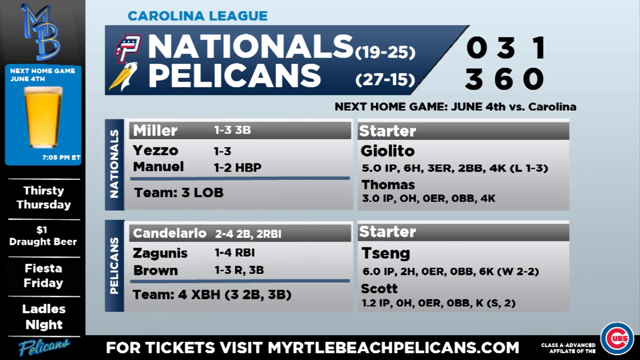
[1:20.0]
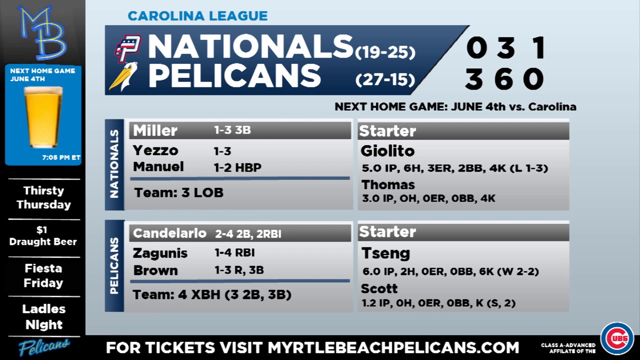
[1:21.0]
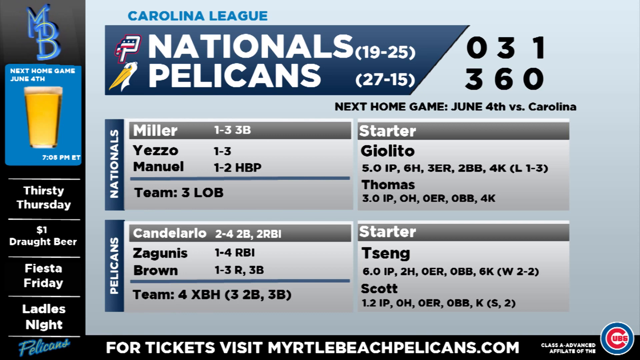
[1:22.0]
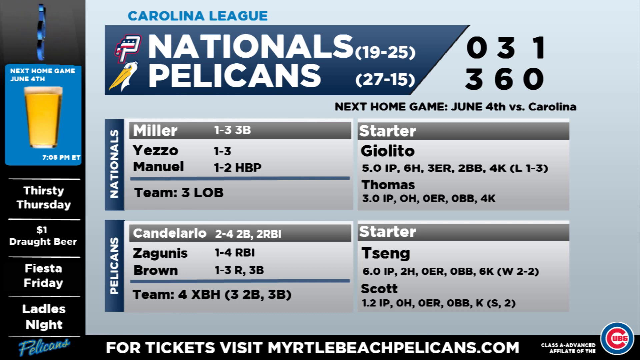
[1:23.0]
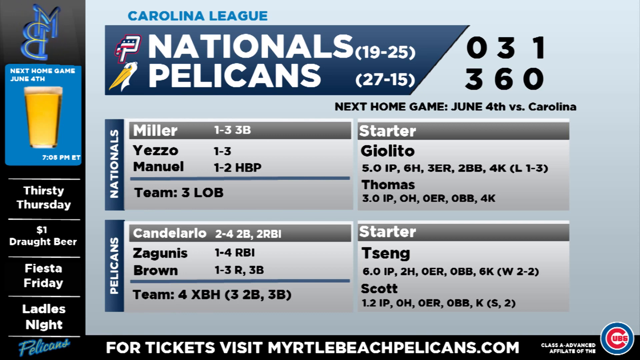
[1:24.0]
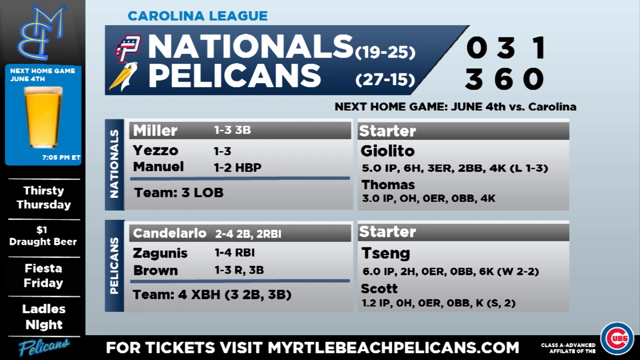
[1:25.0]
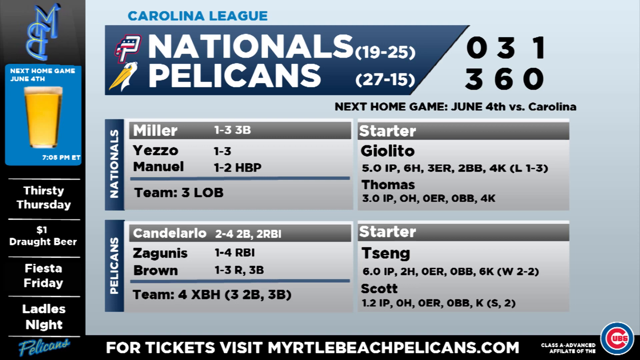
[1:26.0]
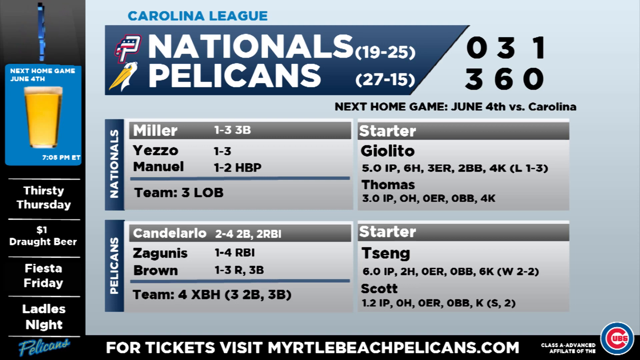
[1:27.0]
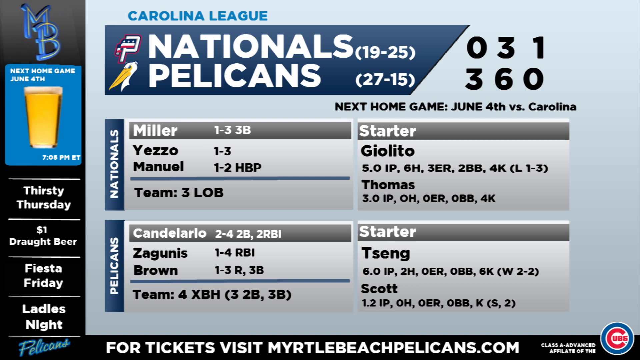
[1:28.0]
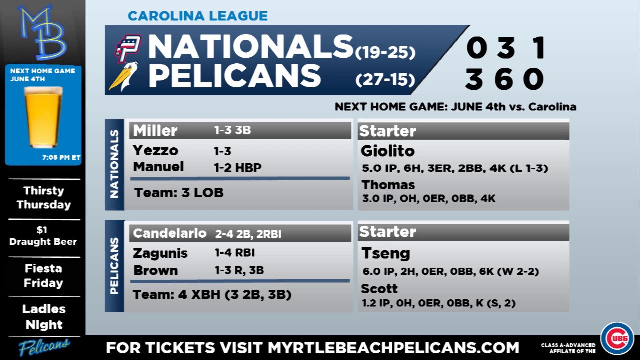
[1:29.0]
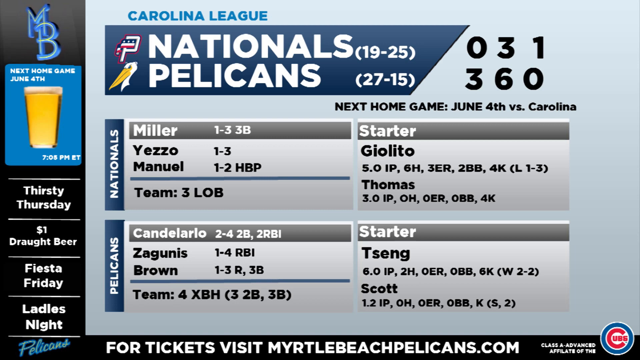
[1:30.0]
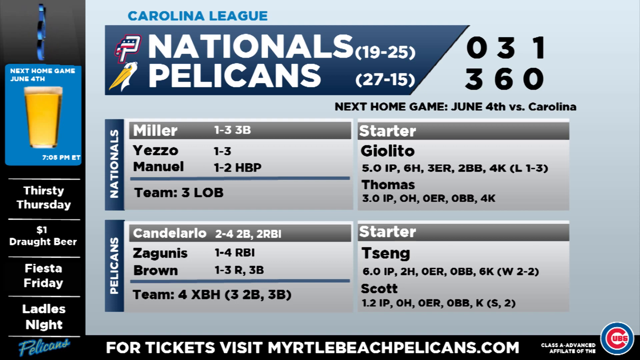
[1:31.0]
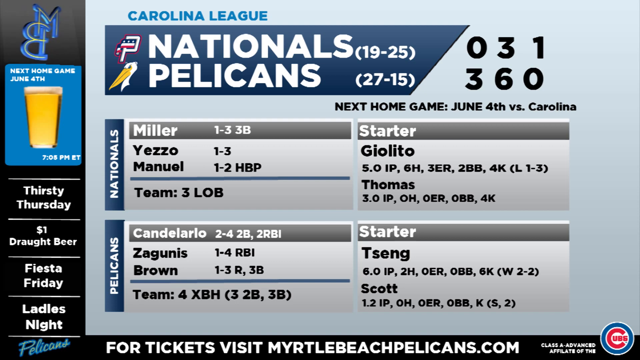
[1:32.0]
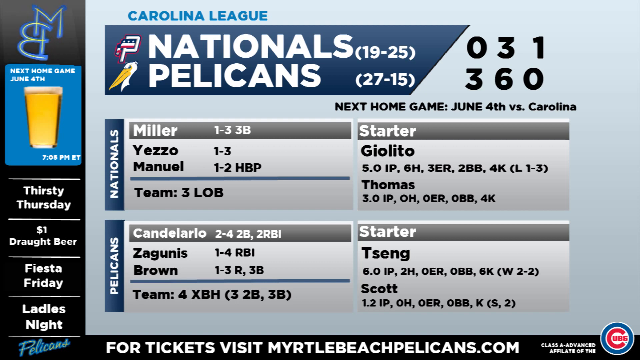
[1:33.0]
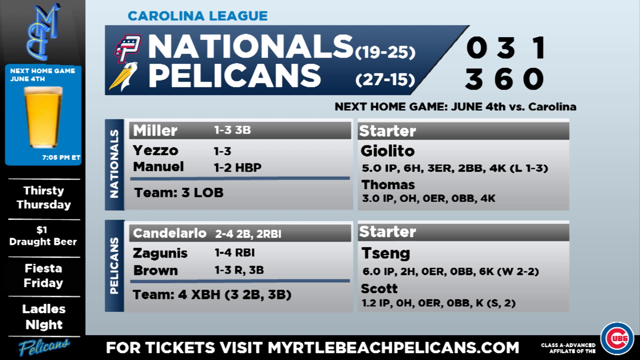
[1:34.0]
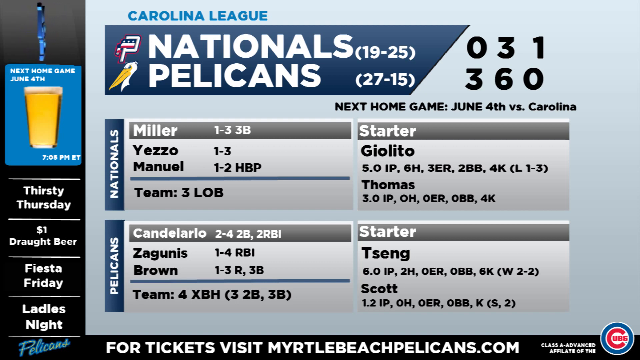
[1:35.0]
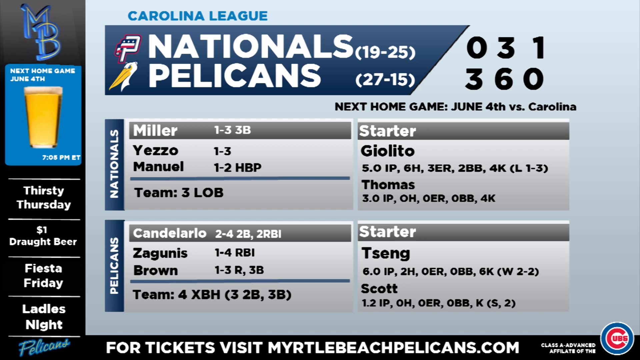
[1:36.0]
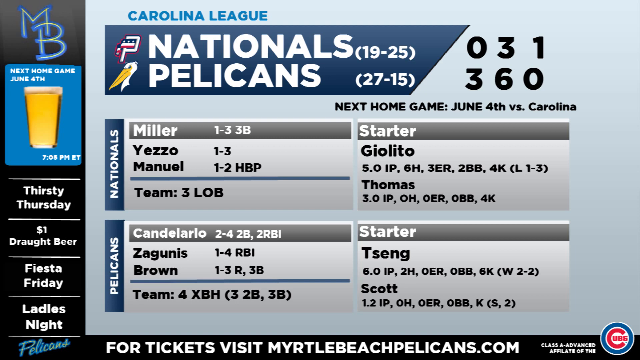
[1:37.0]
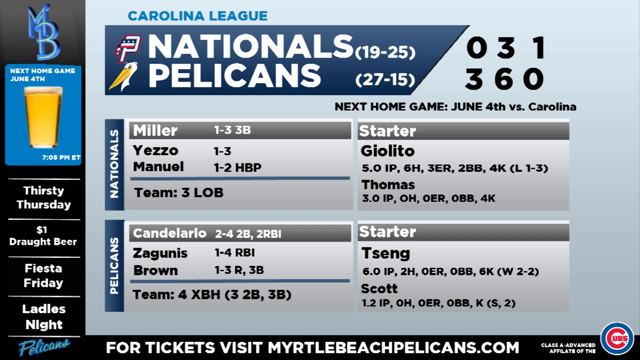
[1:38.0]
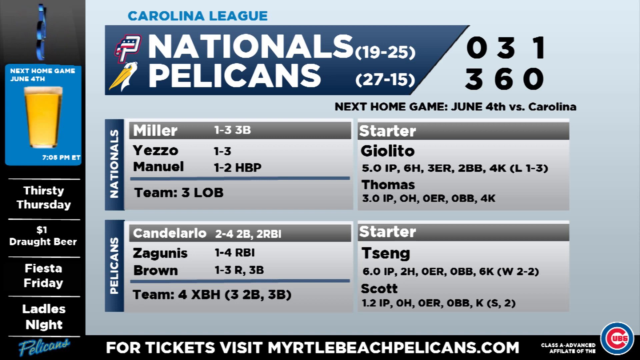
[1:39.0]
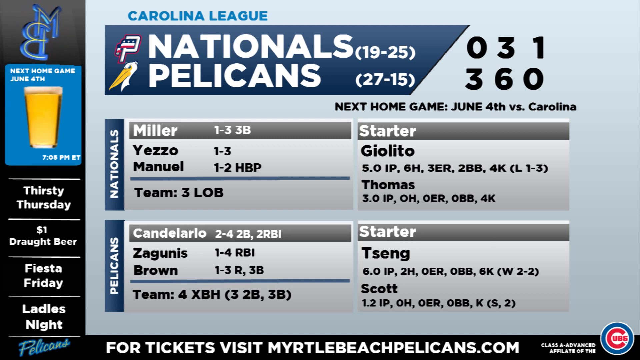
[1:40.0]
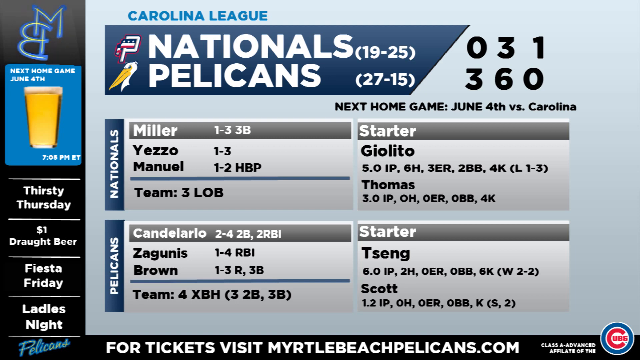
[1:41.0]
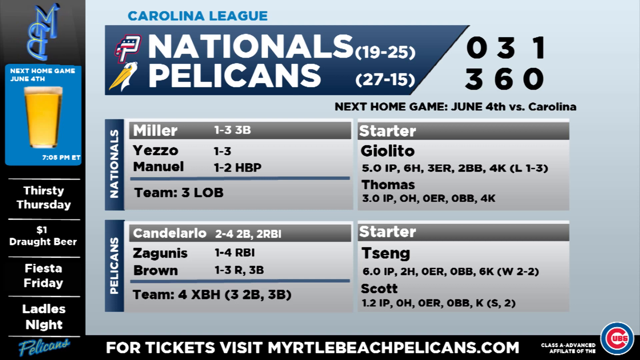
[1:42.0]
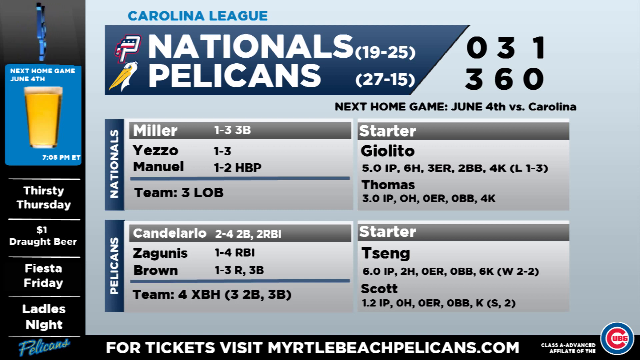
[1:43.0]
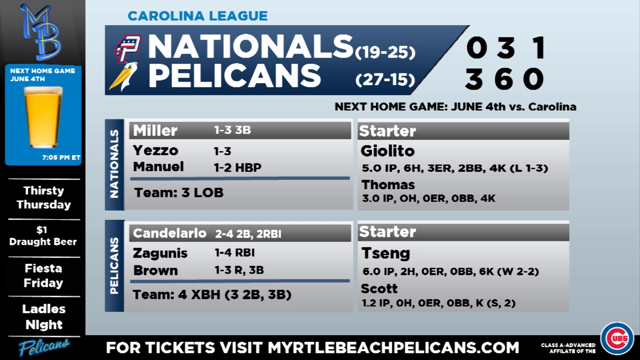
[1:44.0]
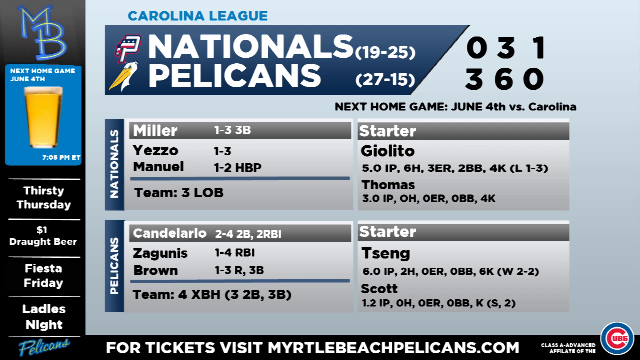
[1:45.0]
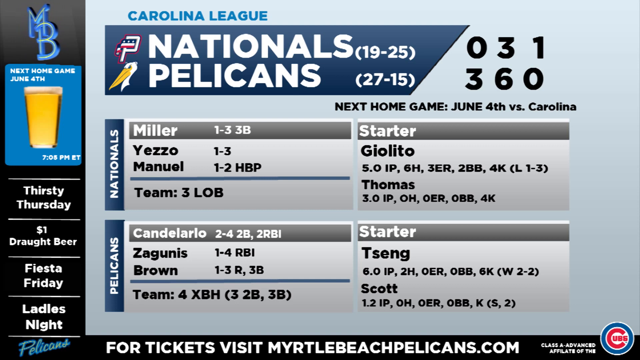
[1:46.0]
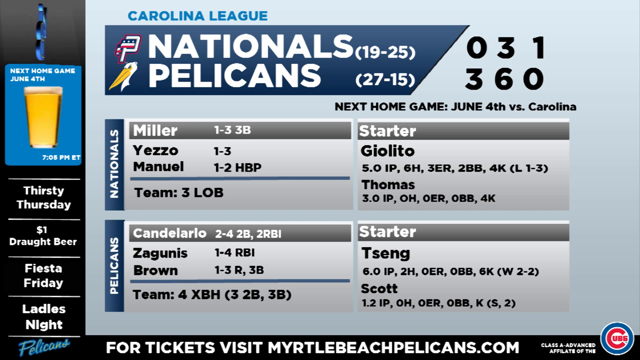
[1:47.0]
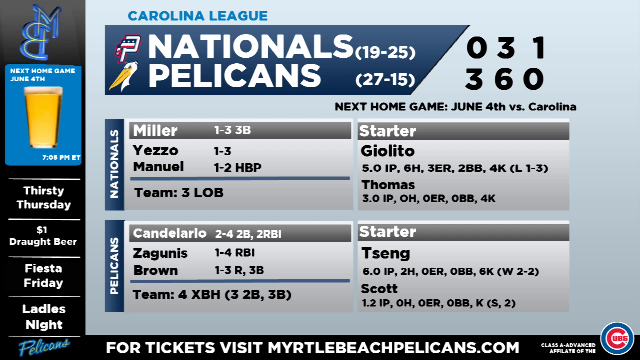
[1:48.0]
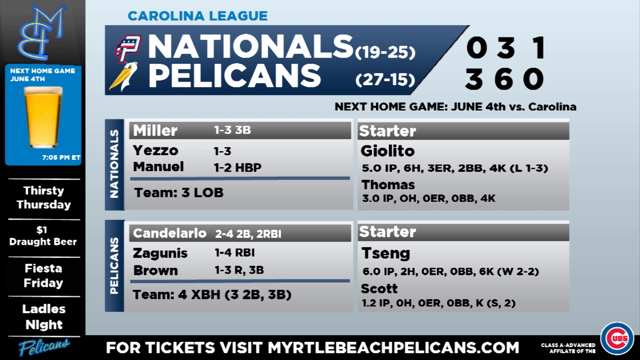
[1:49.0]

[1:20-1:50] The same stats display remains on screen, with a Nationals section listing players and a Pelicans section listing players such as Brown, the starter spelled T-S-E-N-G, and Scott. Text reads "To get tickets, visit MyrtleBeachPelicans.com." On the left side, text reads "next home game, June 4th" with a glass of beer and "7 p.m. ET." Below that is "Thirsty Thursdays," then a thin white line across, and a dollar sign with "Drought Beer" underneath. Another thin white line leads to "Fiesta" with "Friday" underneath, followed by another thin white line and further text that is hard to make out, then another thin white line and more text.